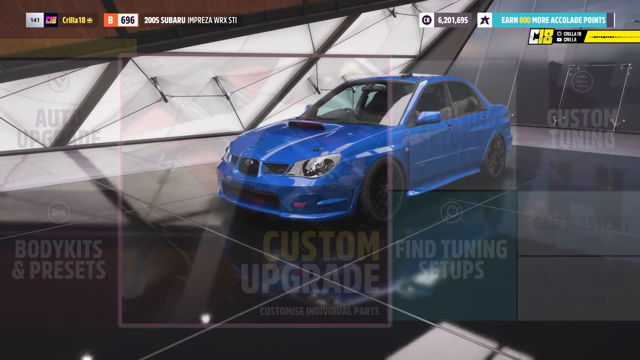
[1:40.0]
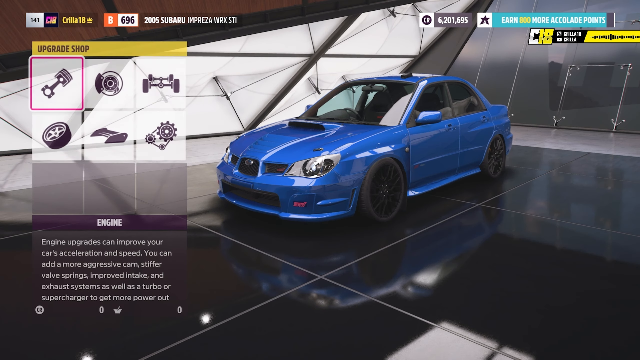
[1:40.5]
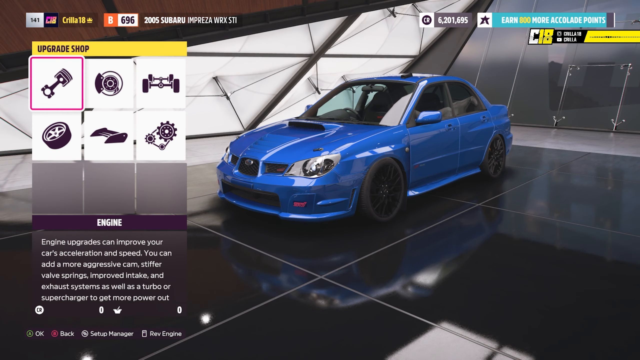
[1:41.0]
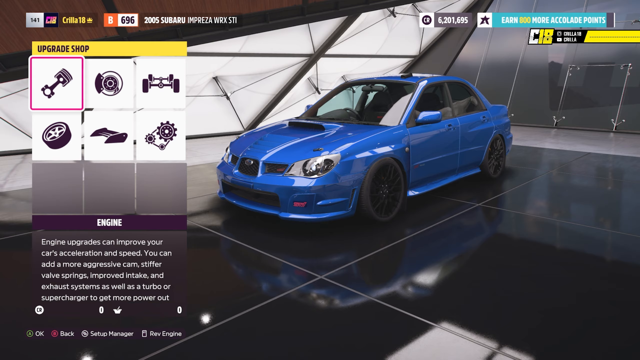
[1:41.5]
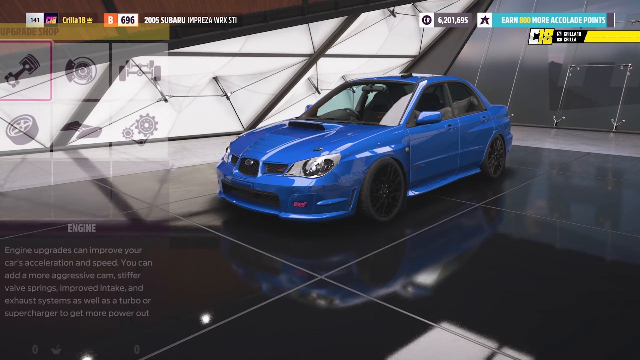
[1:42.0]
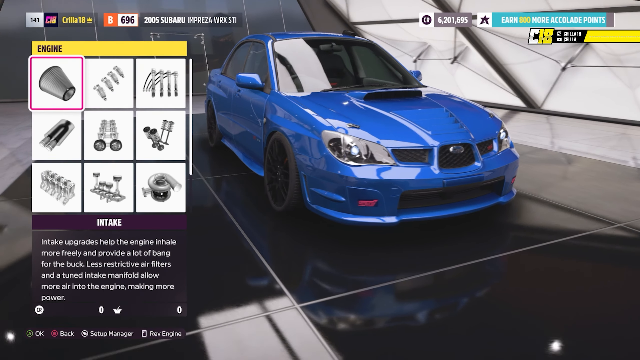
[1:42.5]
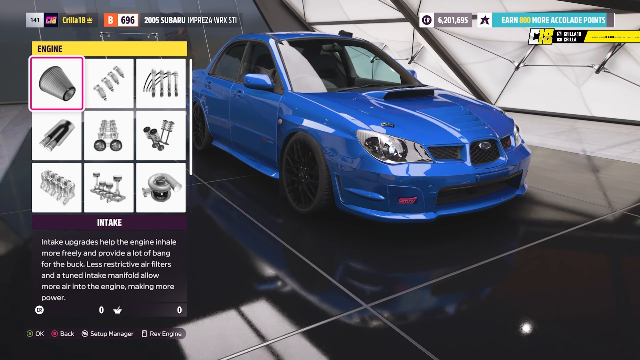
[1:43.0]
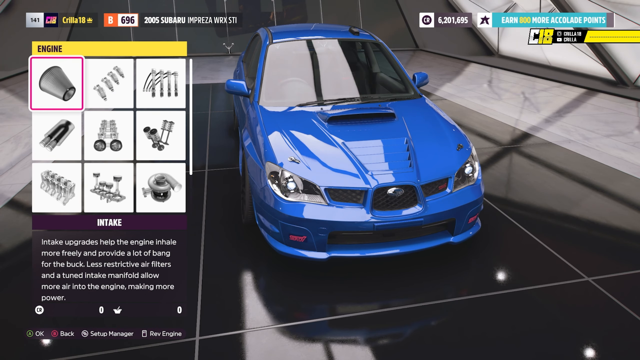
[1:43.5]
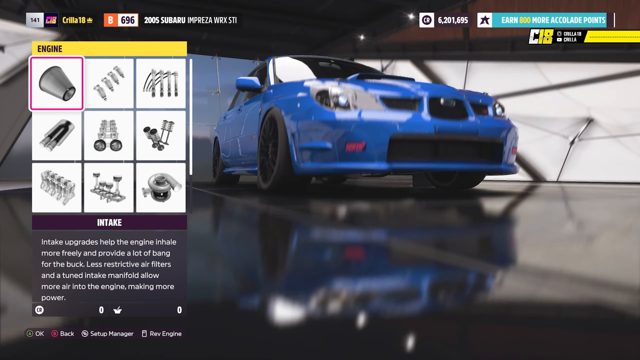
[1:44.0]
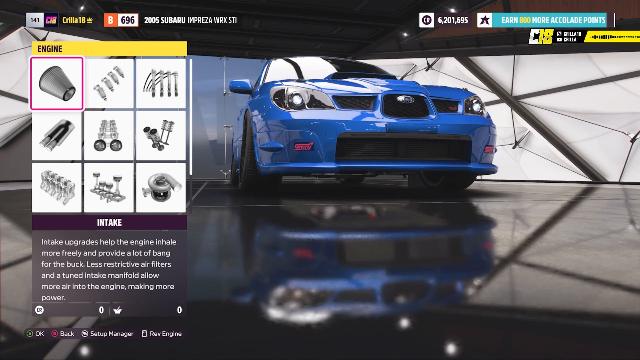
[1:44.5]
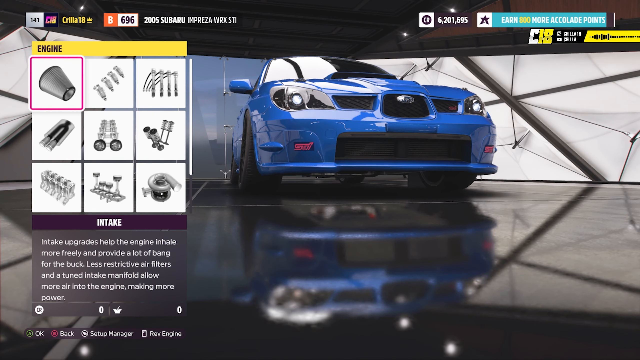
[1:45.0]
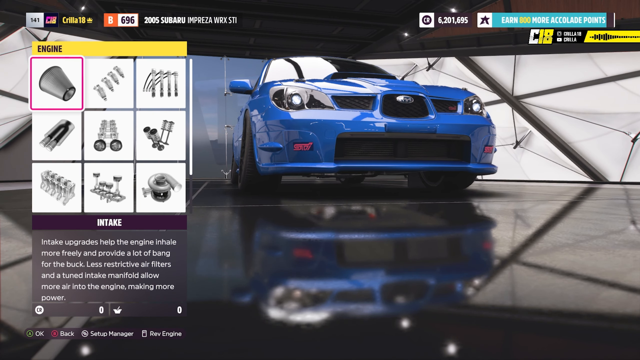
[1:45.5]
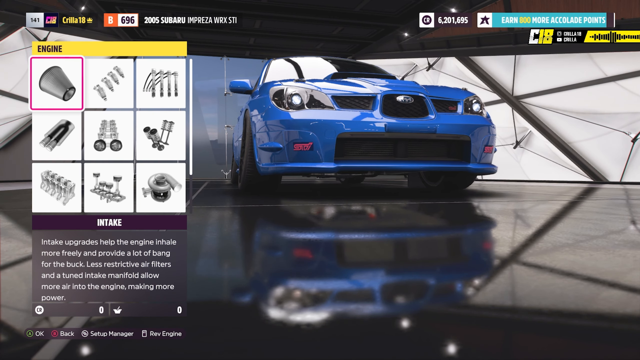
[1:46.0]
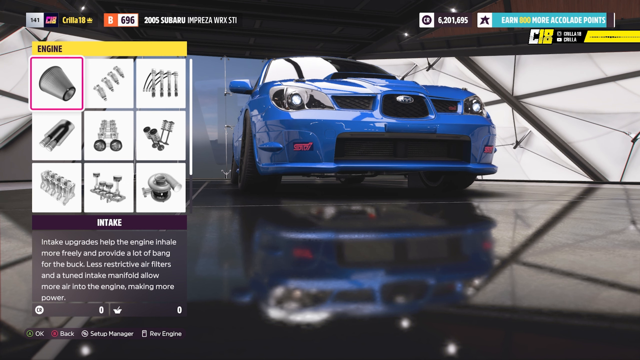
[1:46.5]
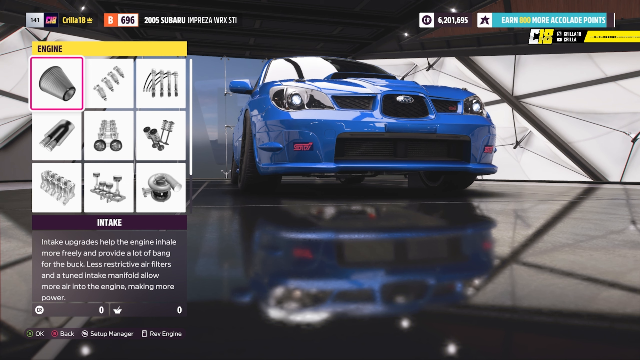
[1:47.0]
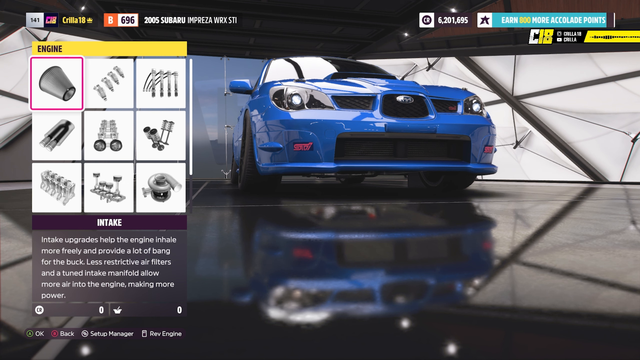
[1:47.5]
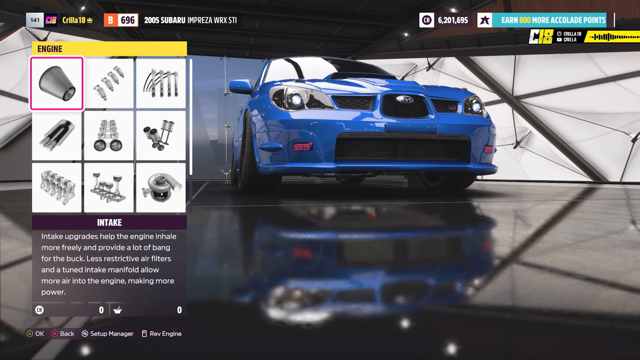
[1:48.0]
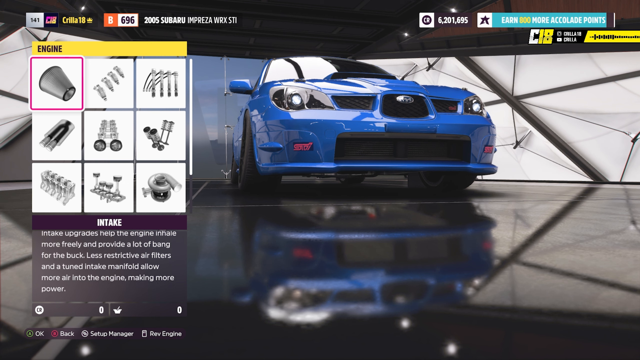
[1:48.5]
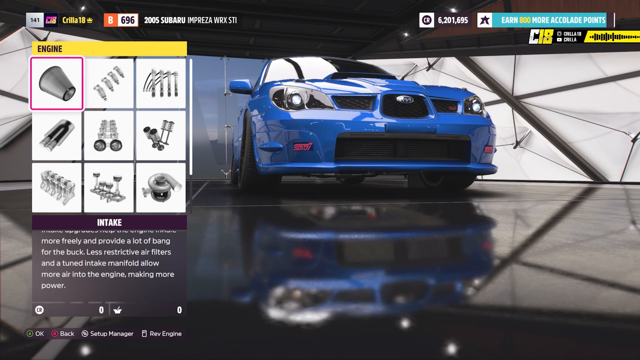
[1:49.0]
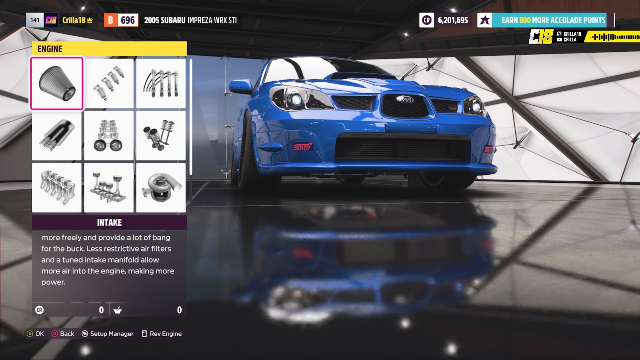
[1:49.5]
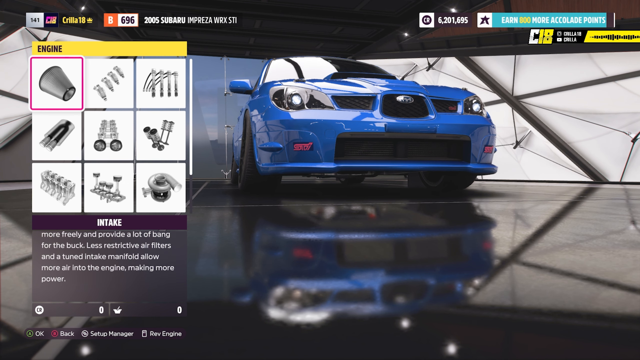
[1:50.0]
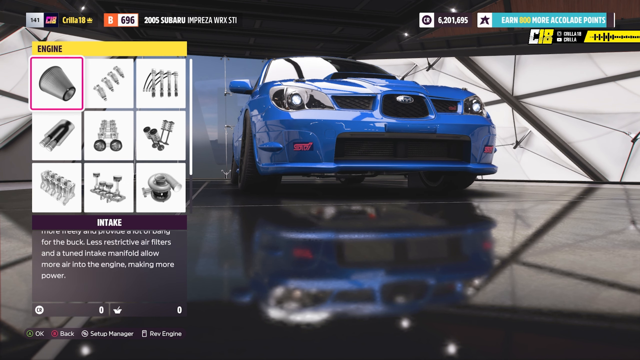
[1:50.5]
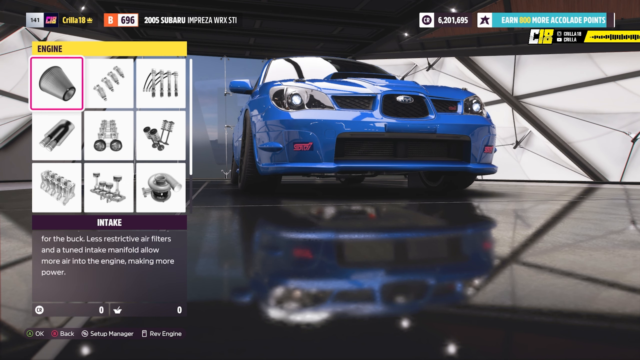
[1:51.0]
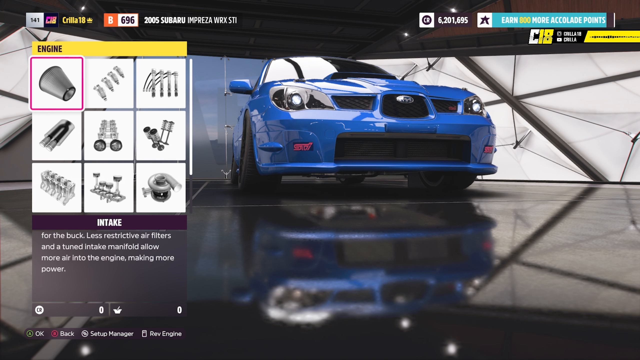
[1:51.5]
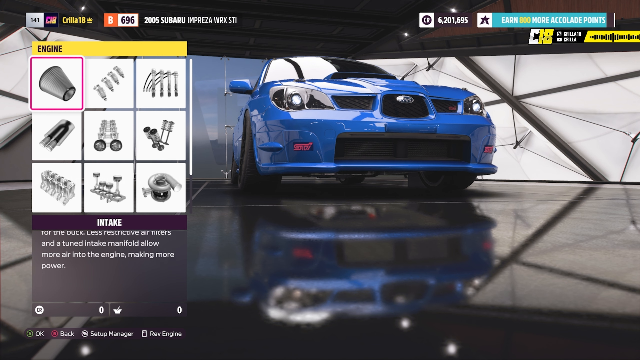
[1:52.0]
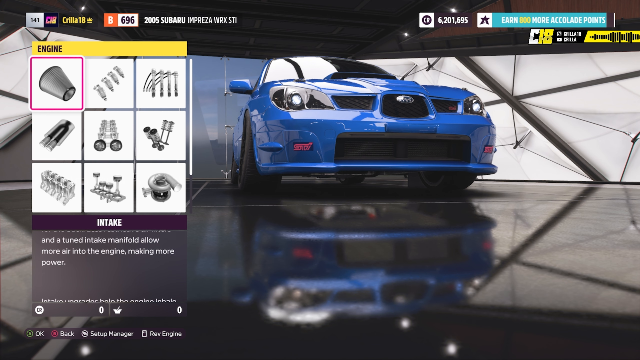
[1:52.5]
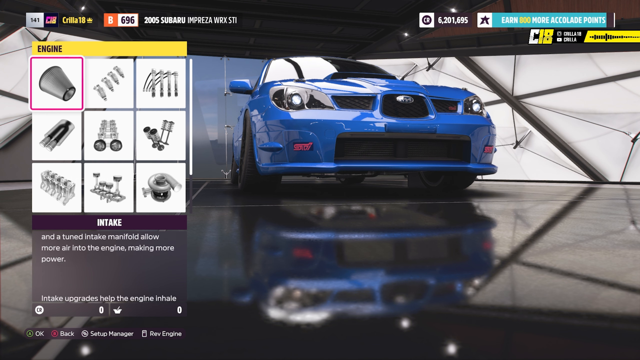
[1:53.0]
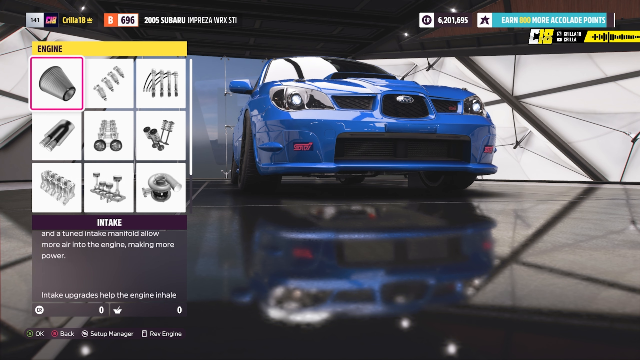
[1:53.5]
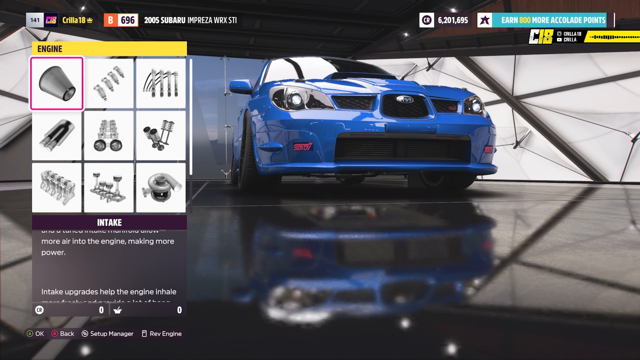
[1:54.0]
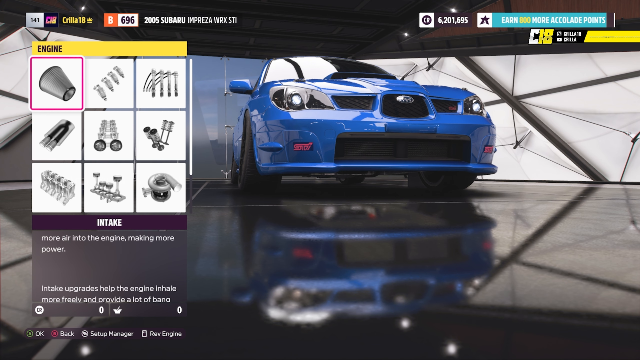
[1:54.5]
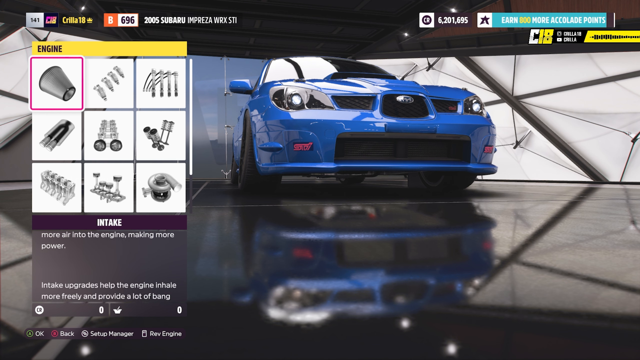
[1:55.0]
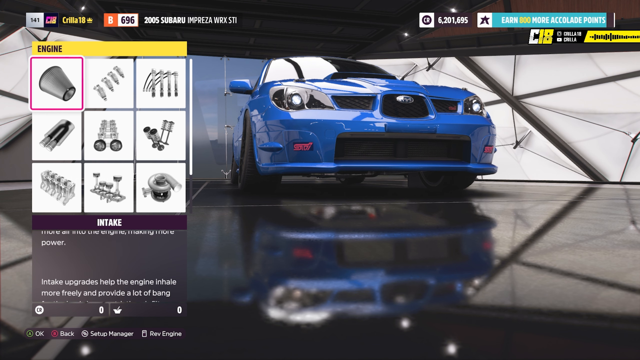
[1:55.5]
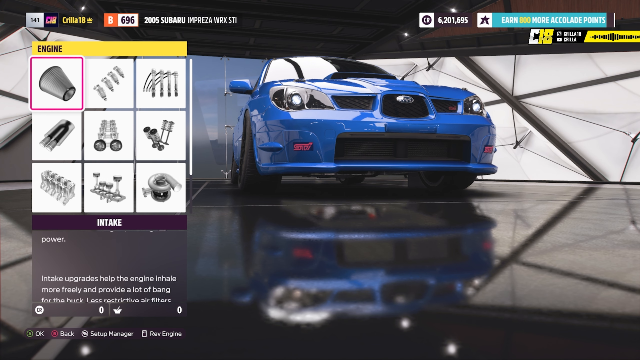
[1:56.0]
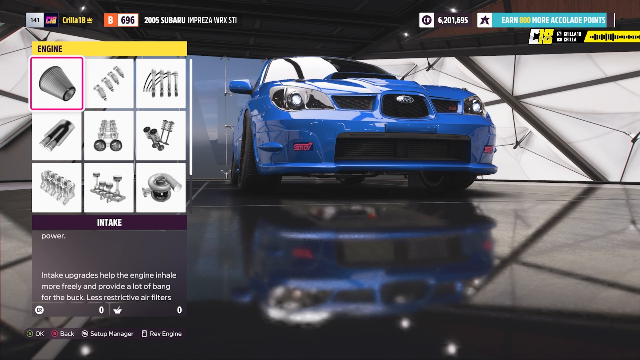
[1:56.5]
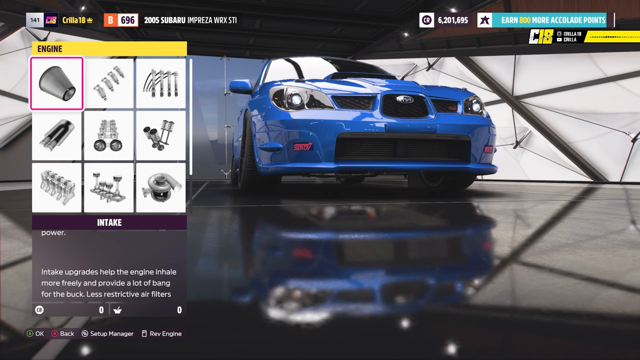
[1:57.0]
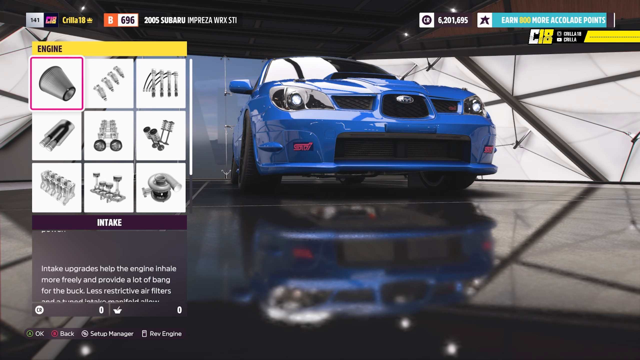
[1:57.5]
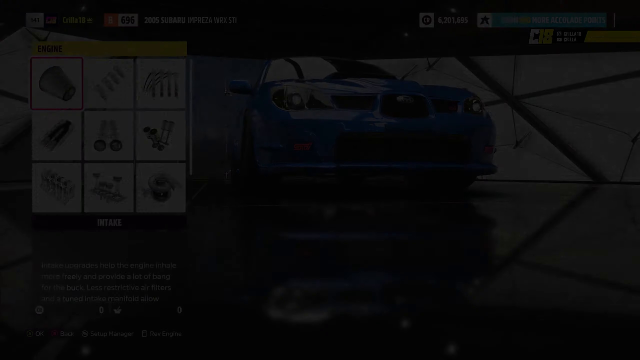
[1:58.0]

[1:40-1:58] The player goes back into the customization menu, heads to the engine option, and rotates the camera around a couple of times. They then let the explanation text scroll for a bit.